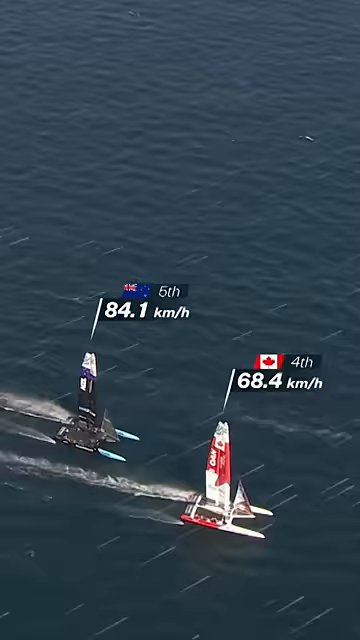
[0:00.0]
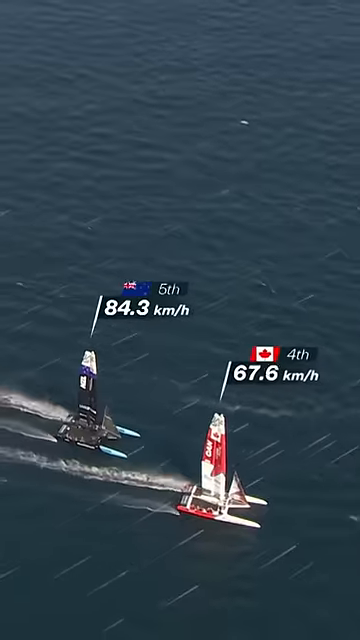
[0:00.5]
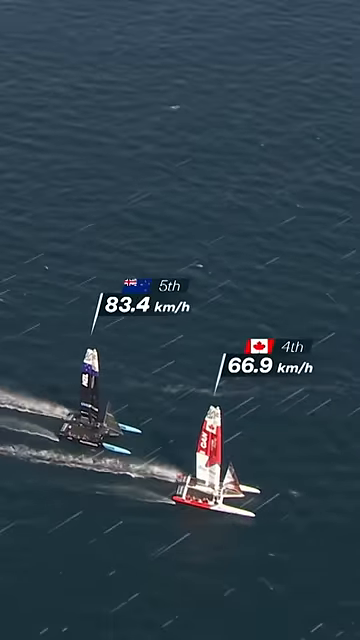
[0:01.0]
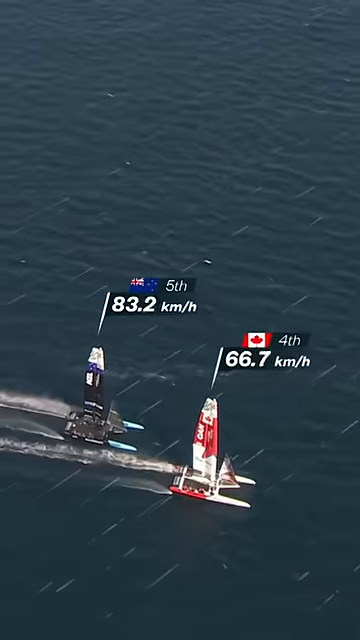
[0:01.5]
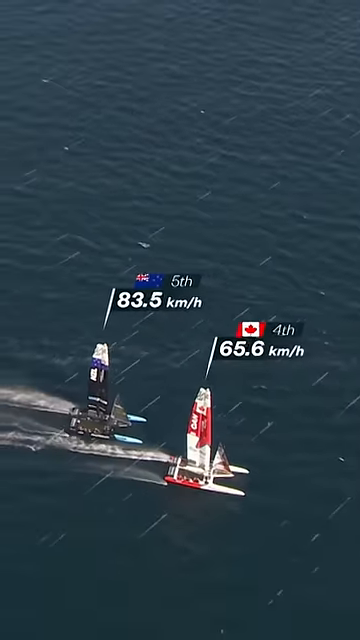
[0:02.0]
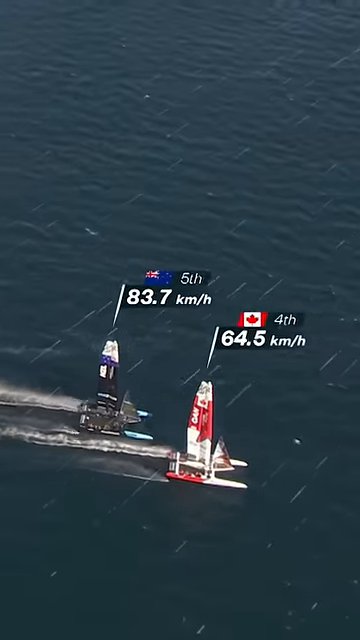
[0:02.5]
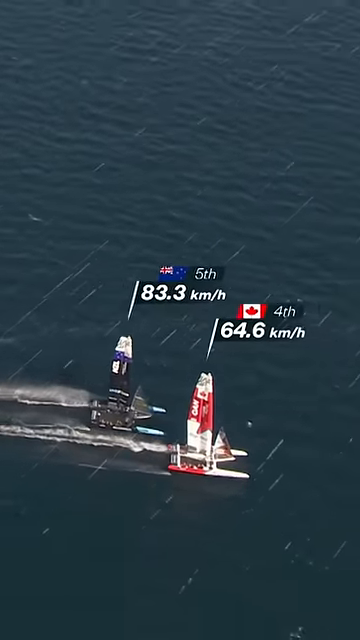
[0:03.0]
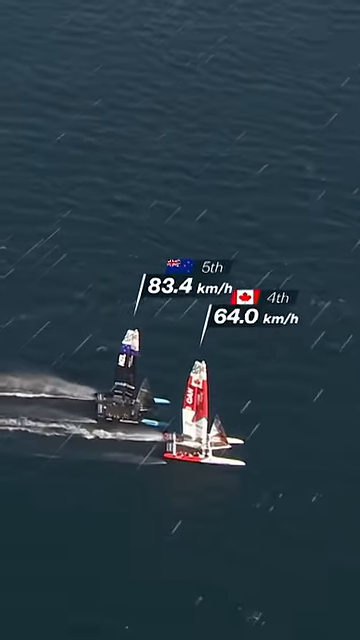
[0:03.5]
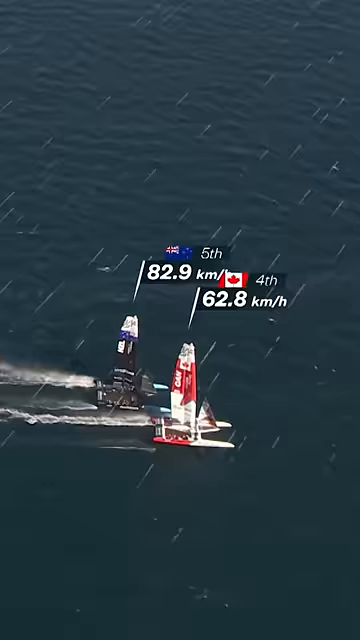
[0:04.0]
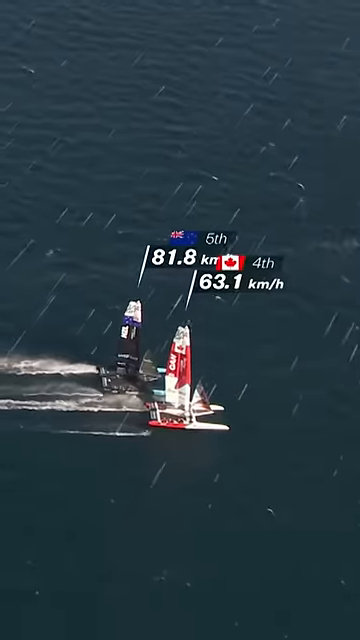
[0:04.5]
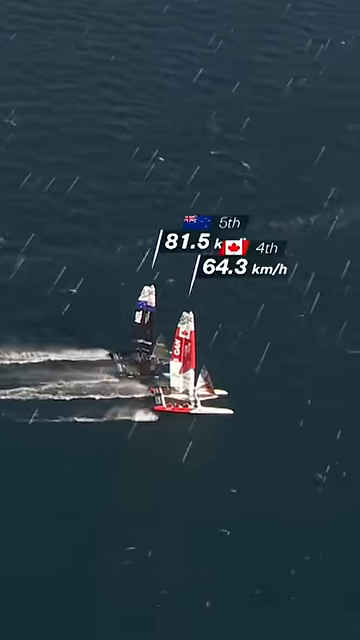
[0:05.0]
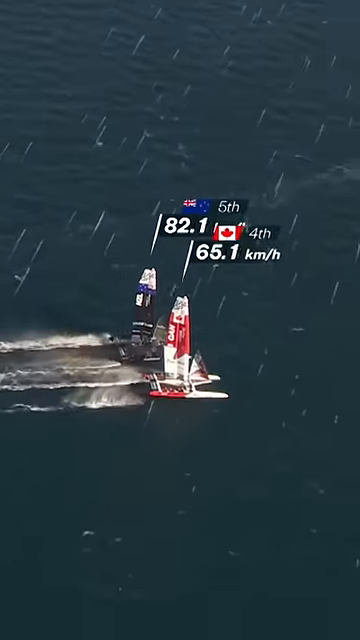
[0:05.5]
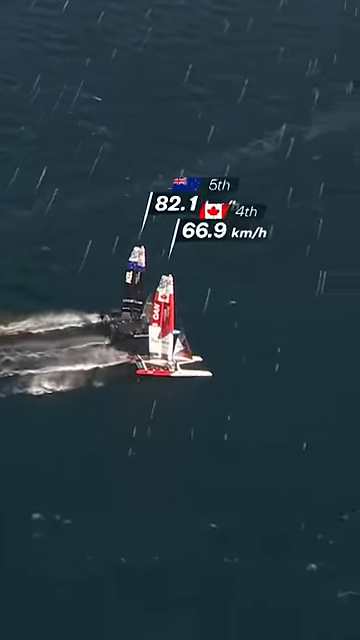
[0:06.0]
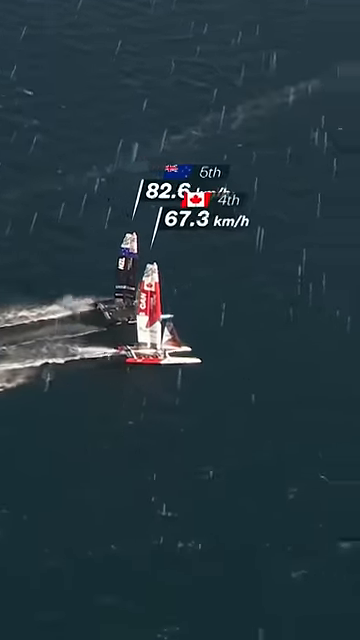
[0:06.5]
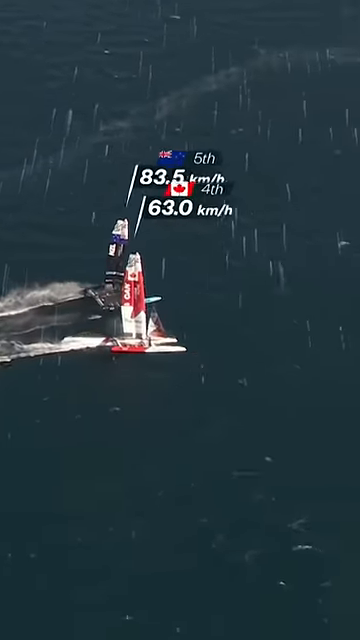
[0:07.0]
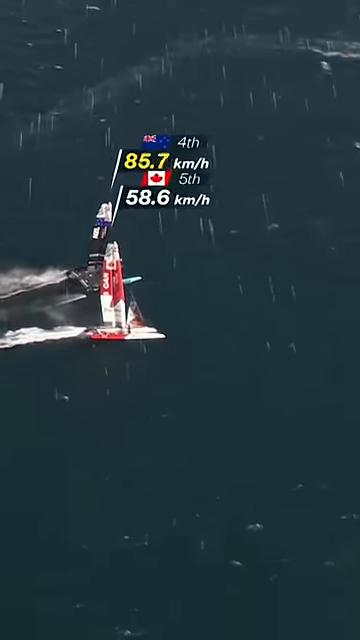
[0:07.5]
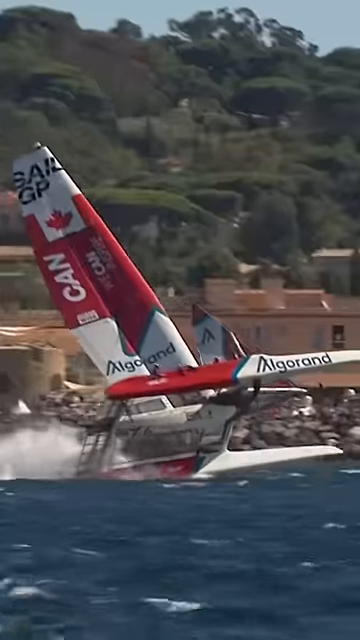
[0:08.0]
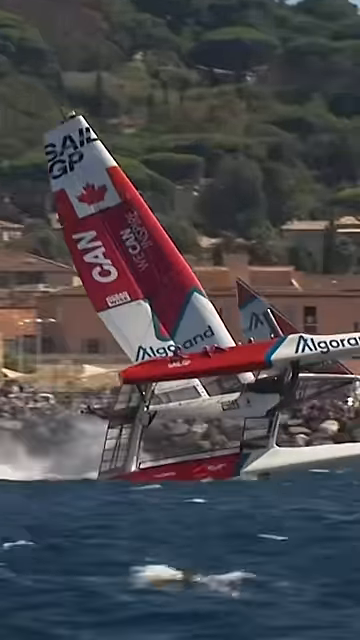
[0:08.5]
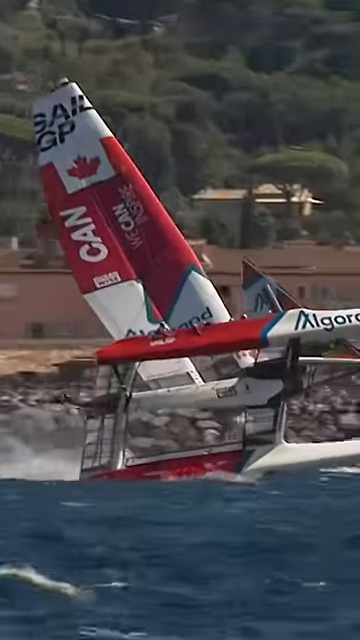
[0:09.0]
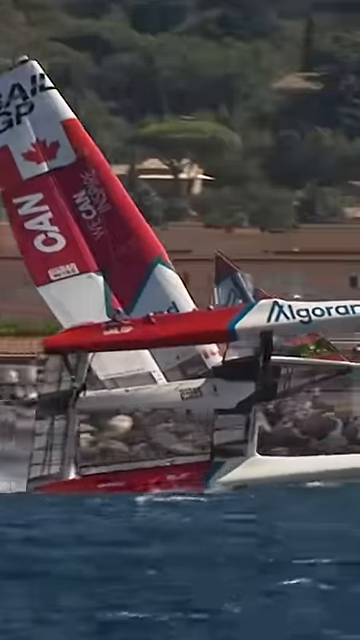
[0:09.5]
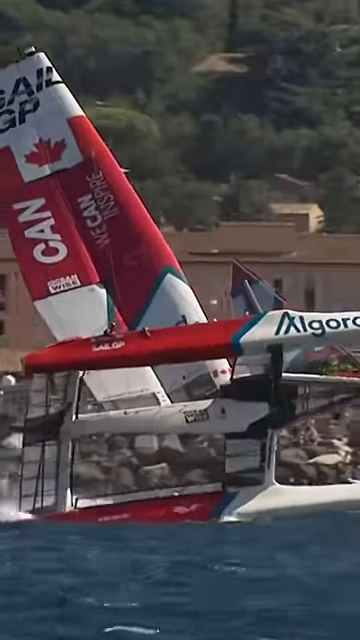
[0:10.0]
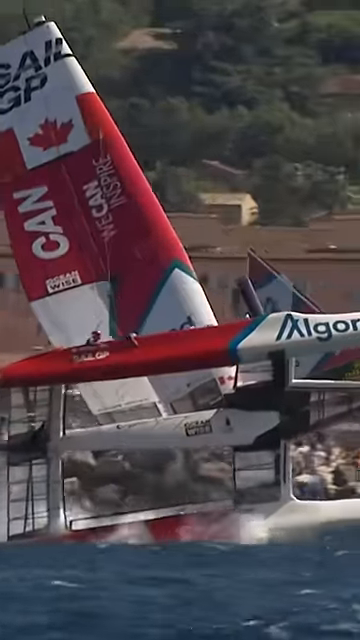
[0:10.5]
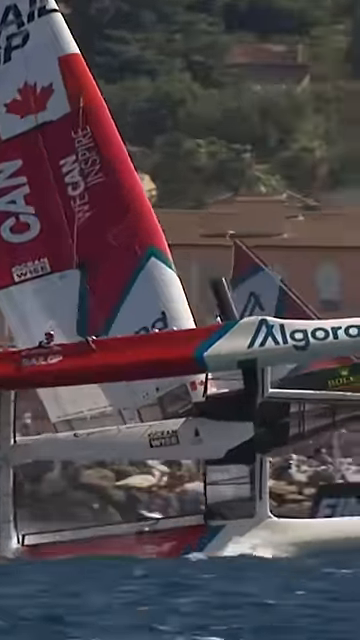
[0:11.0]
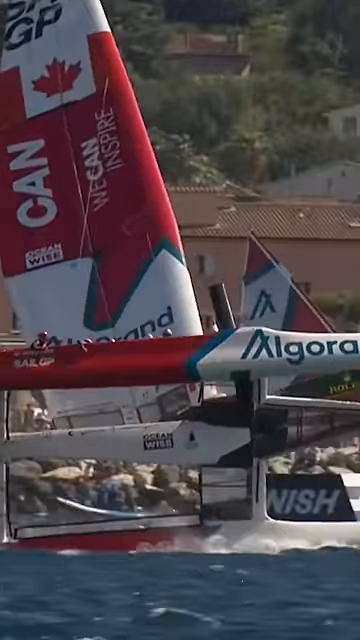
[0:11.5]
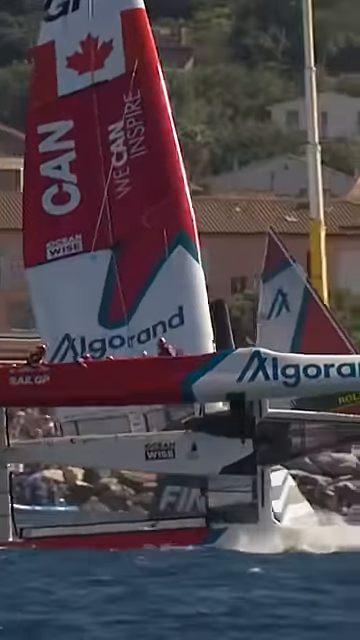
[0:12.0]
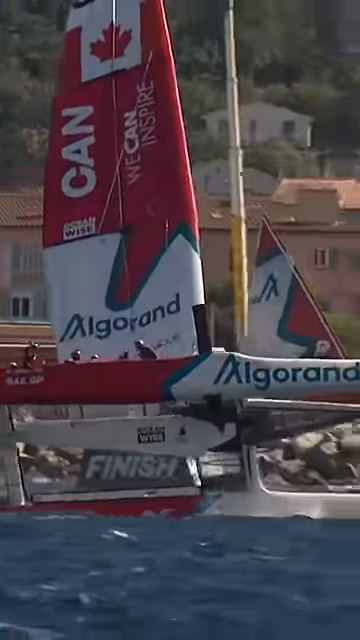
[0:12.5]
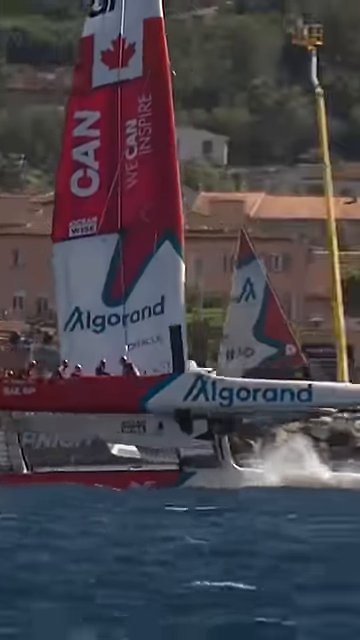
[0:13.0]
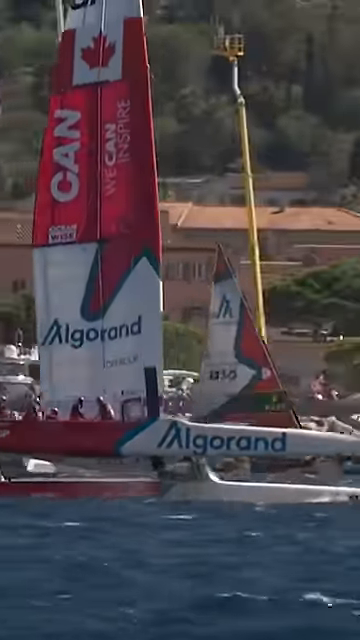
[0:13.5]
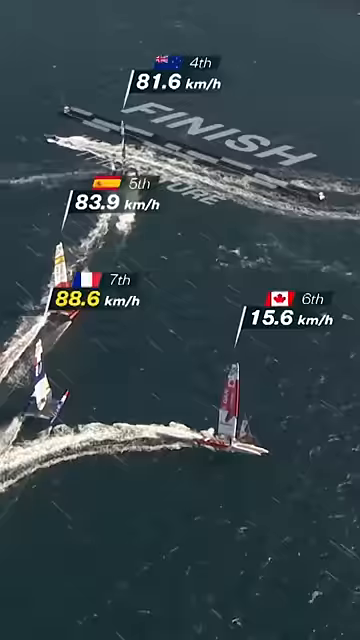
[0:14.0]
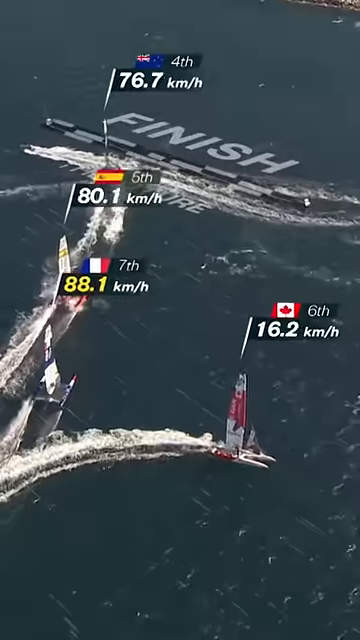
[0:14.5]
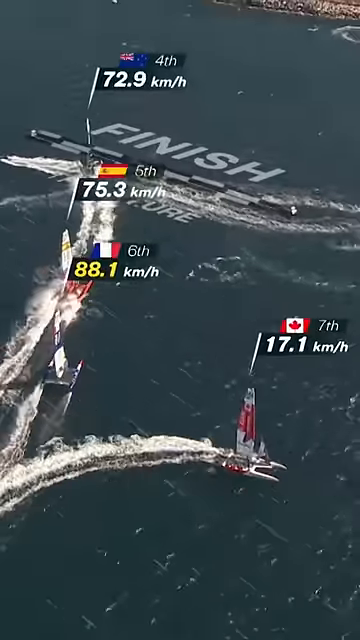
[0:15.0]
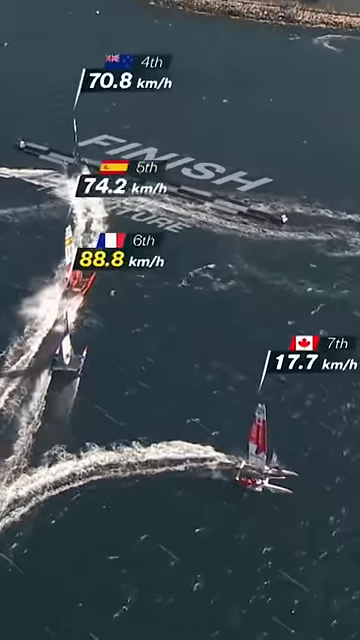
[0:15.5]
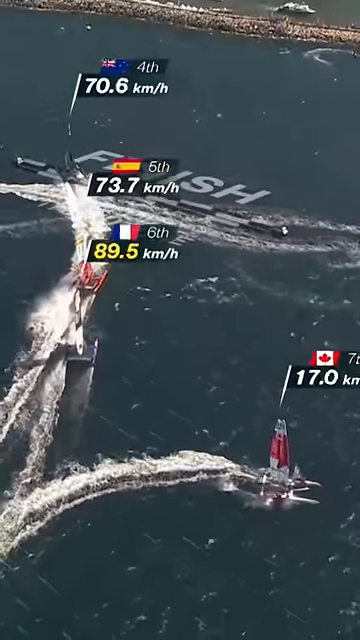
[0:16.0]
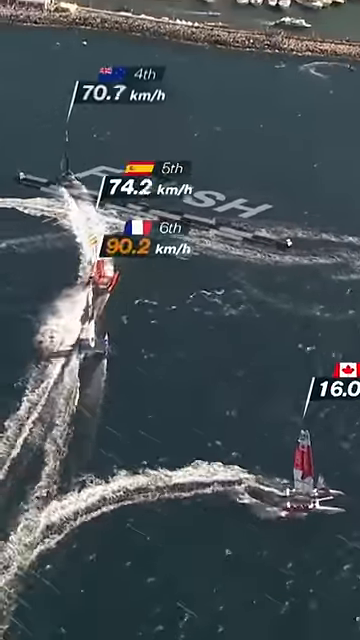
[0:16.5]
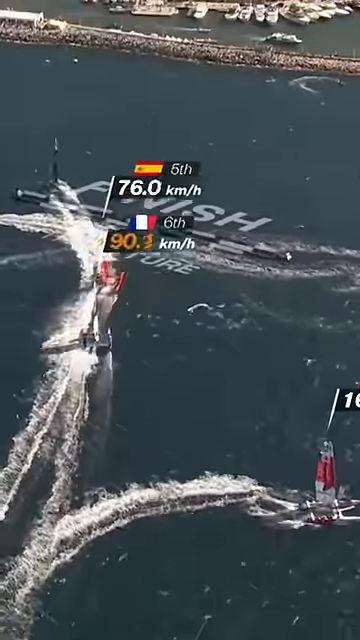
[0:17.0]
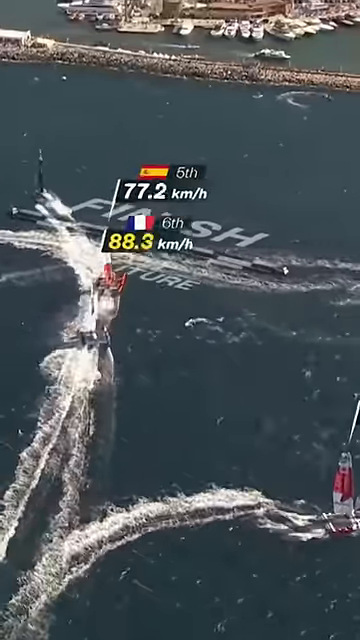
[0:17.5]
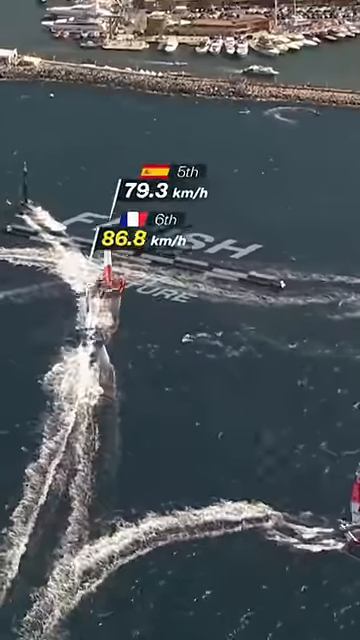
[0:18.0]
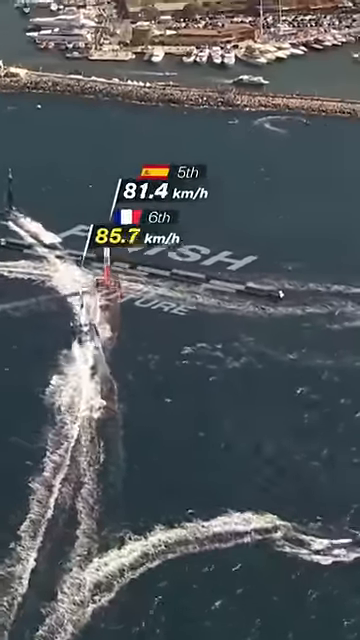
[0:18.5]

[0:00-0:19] What looks like possibly a jet ski race between two countries is shown. One of them is going really fast, at 86 miles per hour in the water, while the other is a little slower, in the 60s; the slower one appears to be Canada, with a Canadian flag representing that speed, and the other is apparently represented by the UK. Both are seen skiing along on dark blue water. The Canadian ski is then shown by itself amid the water, with some trees and some buildings some distance away from it. Two other countries then appear; which countries they are is unclear. One has a red, white and blue flag and is going moderately fast, and the other has another colorful flag representing its country. A finish line is visible in the water, and the other two countries appear to come in, heading toward the finish. No people are seen at all. At the finish there is more of the surroundings, apparently including some sand along the shore, and in the final part the land comes into view.